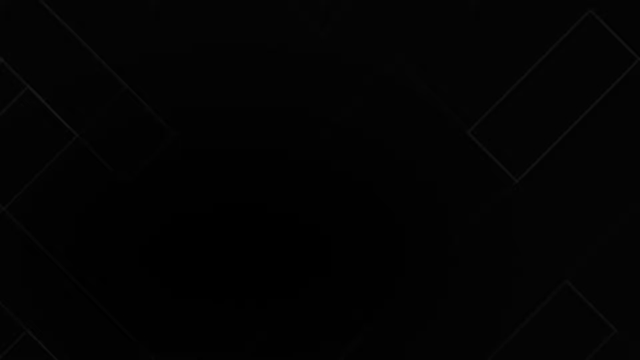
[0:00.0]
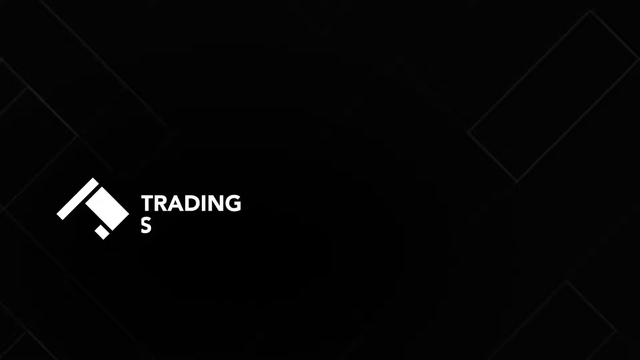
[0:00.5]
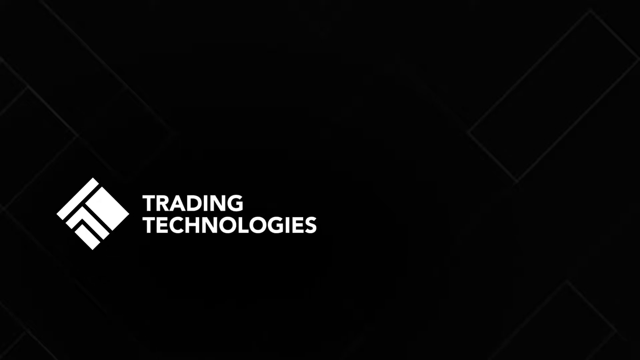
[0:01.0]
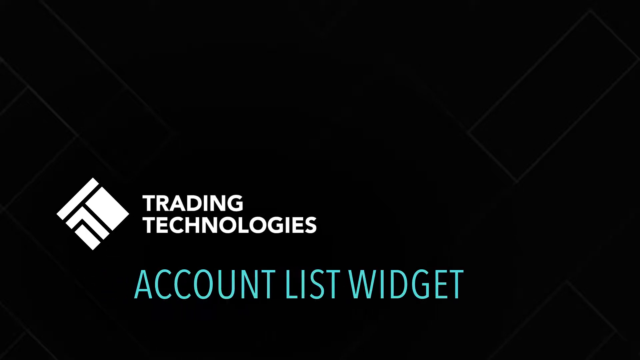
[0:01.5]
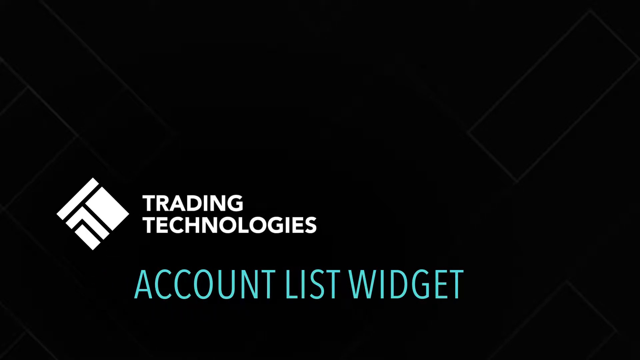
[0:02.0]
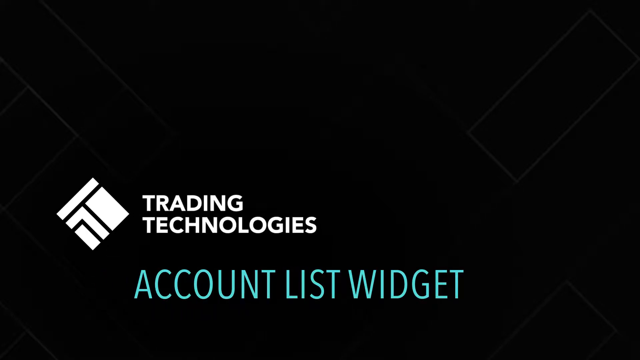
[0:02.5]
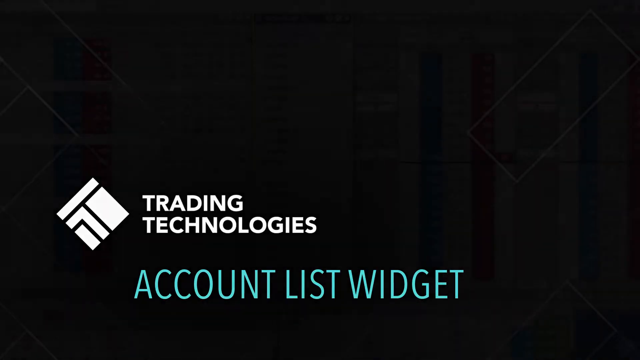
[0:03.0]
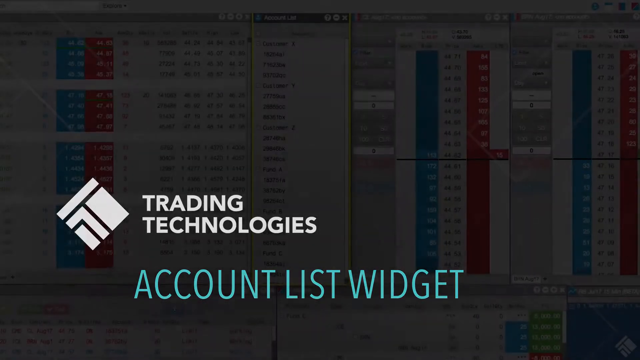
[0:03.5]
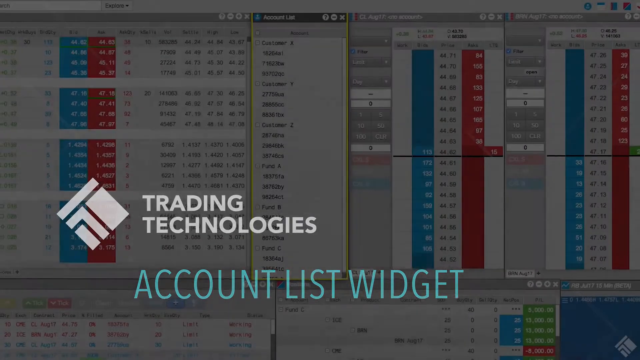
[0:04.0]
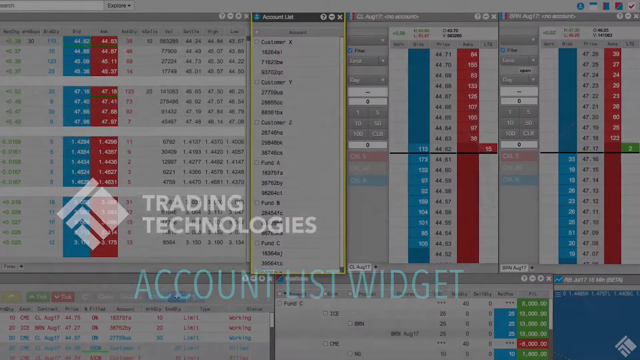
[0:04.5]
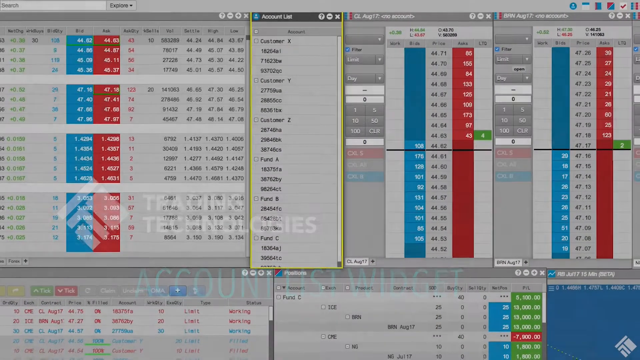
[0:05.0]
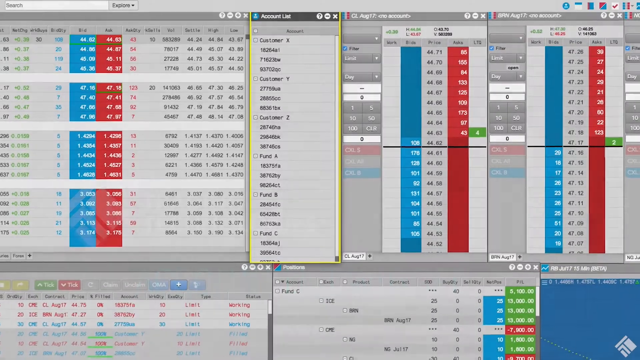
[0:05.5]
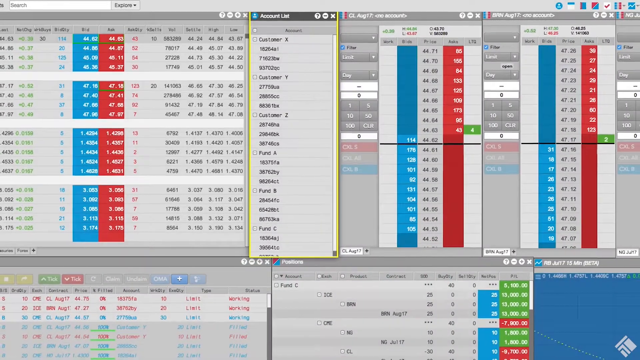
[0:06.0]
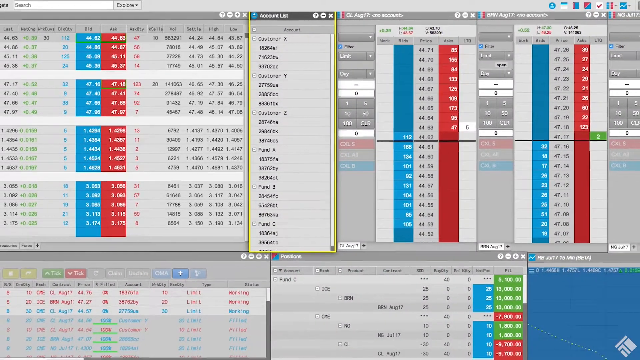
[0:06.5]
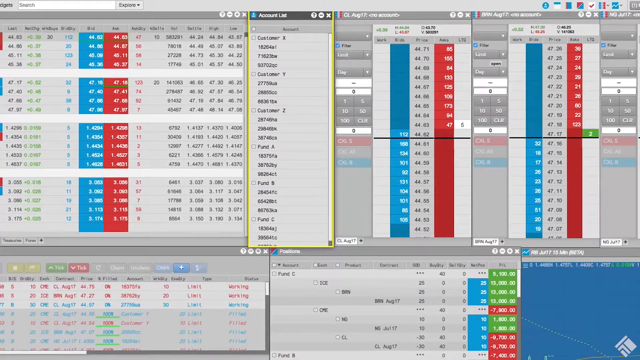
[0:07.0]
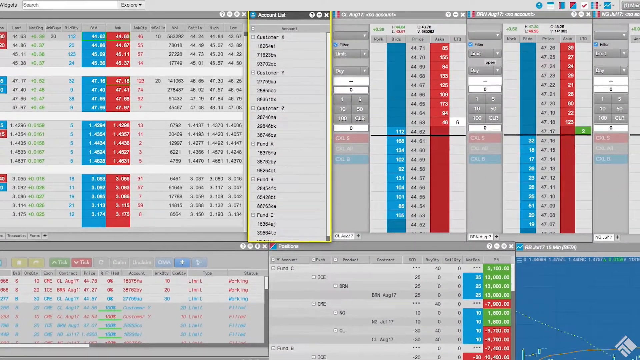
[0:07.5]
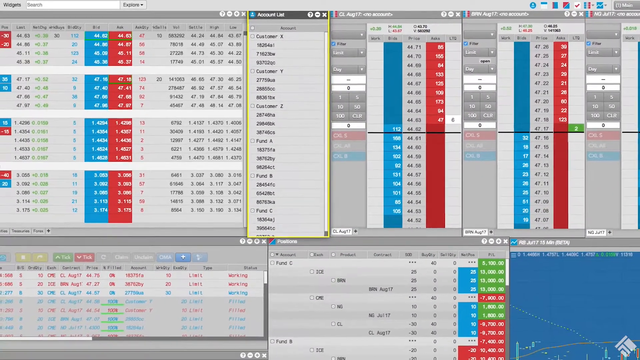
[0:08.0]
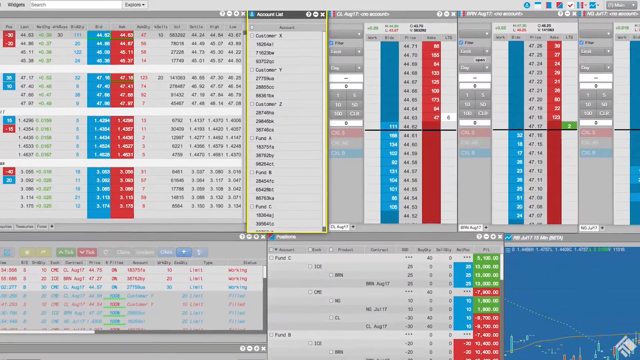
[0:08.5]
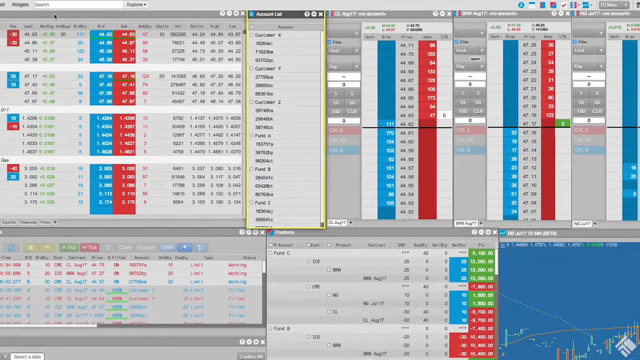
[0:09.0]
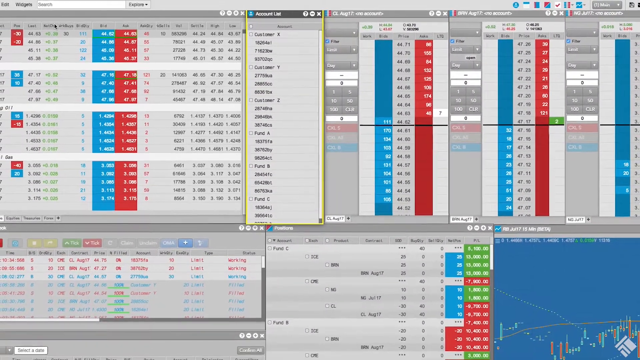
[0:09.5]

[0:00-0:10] A logo for a company called Trading Technologies appears across the screen; the logo is a diamond shape. Below it is the text "account list widget" in a thinner, teal-colored font. The video then moves to a screen with multiple windows open, filled with numbers. It appears to be a financial statement of some sort or a stock market type of listing, with multiple rows and columns of numbers. Four different windows are open; the windows are gray, and the colors in them are blue, red, and green.